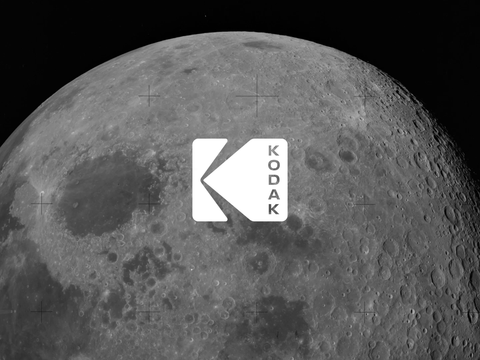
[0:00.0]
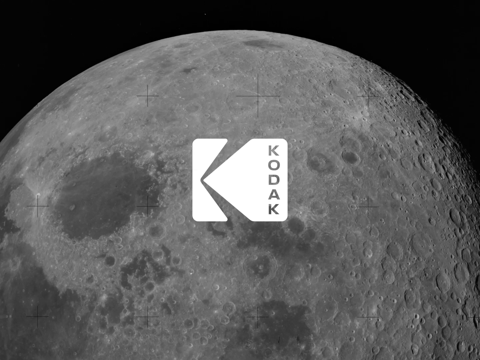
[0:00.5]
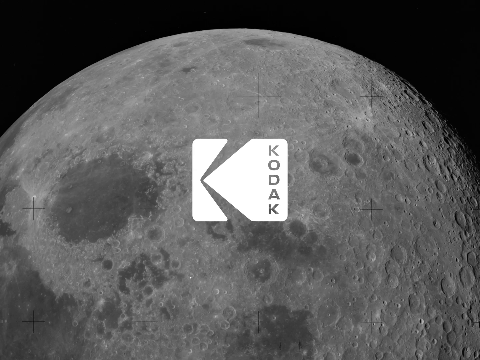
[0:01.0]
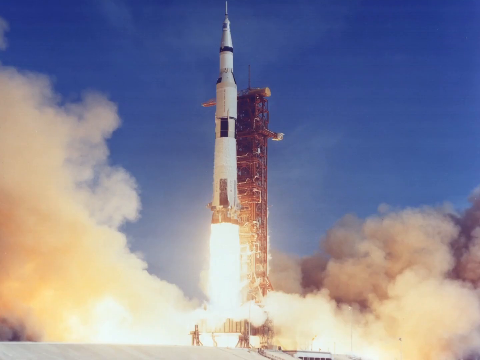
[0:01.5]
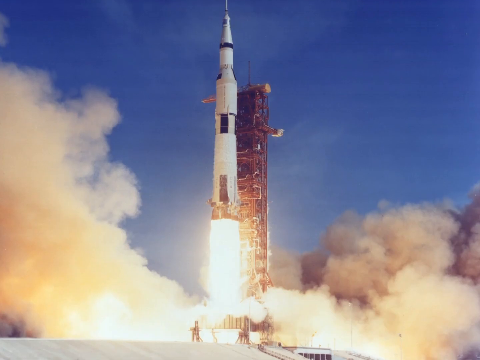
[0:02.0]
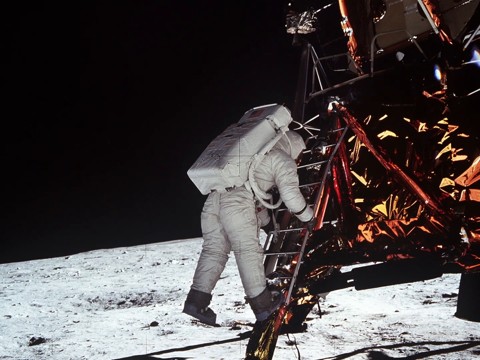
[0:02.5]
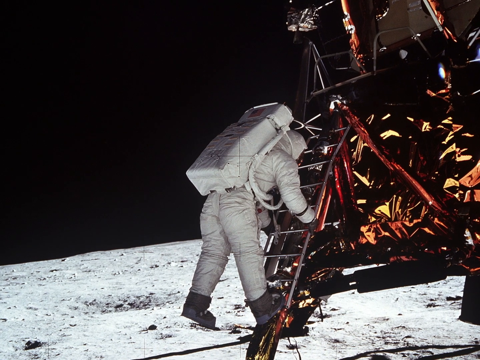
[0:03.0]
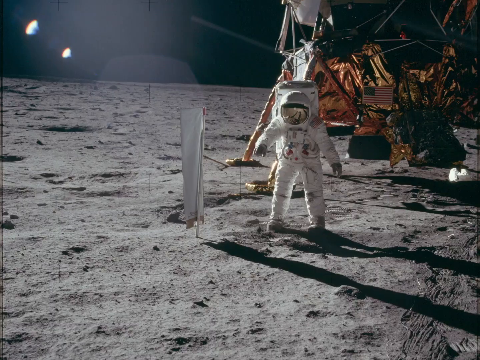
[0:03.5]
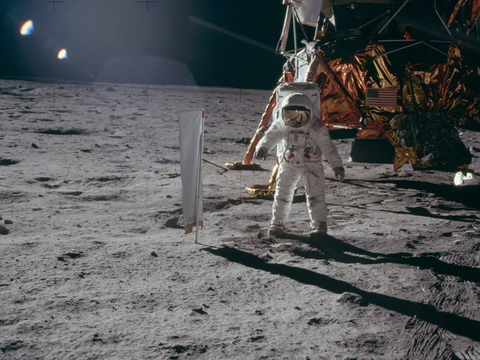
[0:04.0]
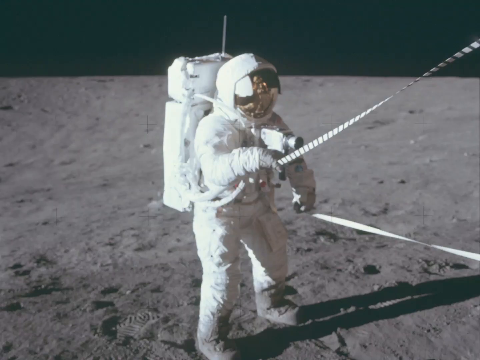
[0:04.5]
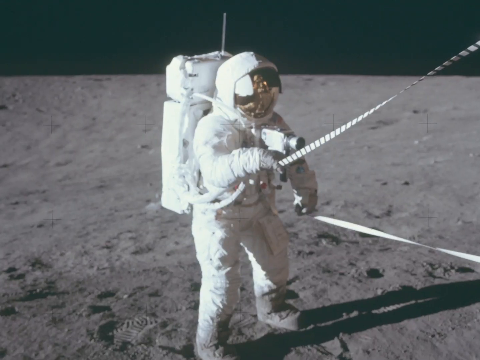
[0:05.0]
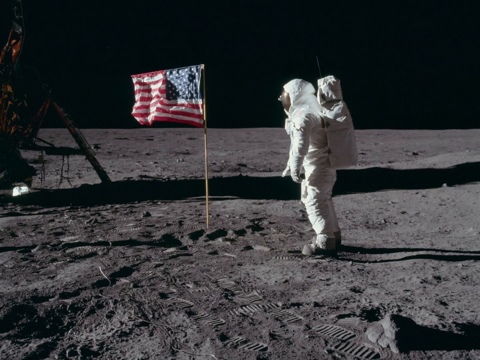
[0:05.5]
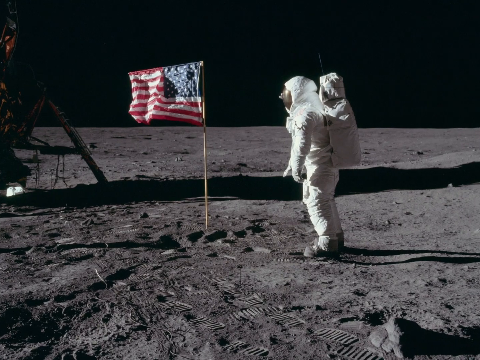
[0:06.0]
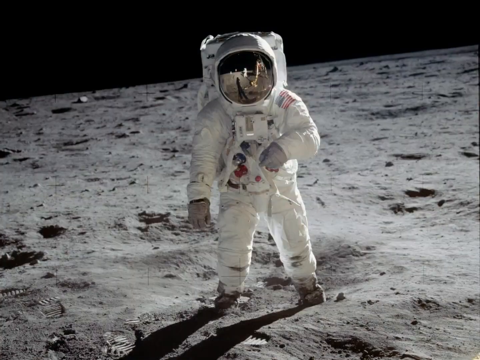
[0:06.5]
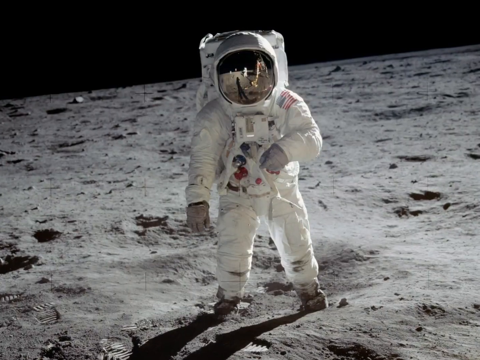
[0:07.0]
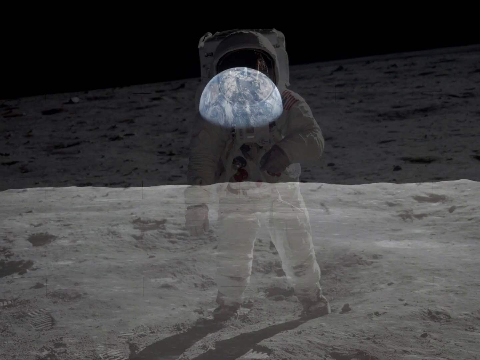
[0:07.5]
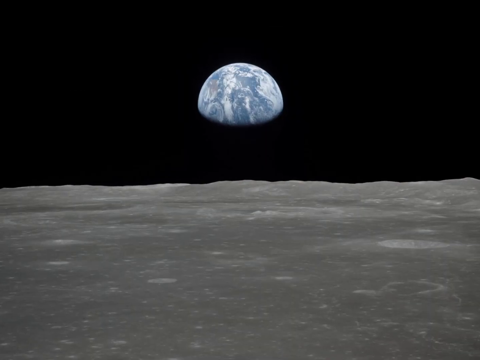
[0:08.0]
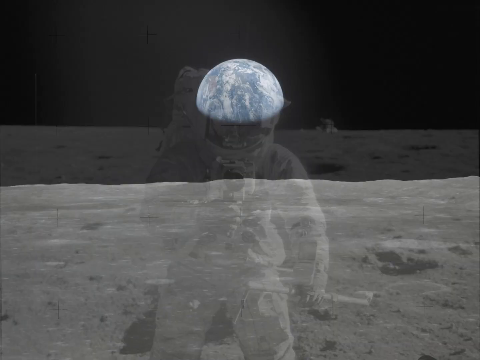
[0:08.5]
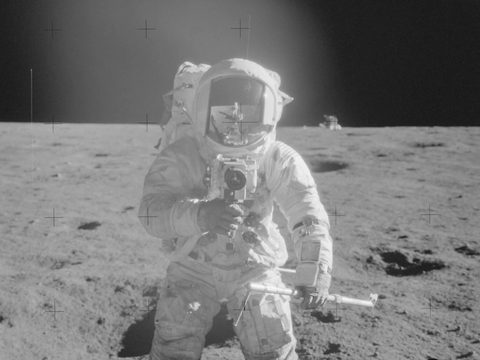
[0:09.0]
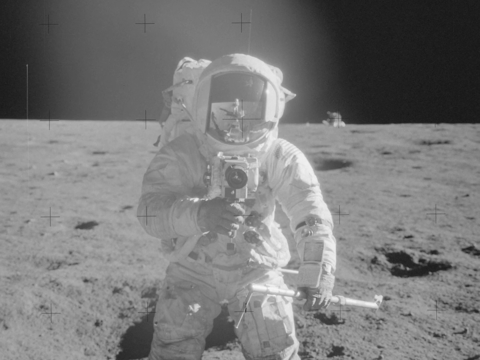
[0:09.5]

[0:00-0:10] The video opens with a far view of the moon, with the Kodak logo in white in the middle. Several pictures follow, including one of a spaceship taking off, with blue sky around the spaceship and several clouds of smoke. Next come different pictures of astronauts who look to be landing on the moon, then an American flag being grounded on the moon. More pictures follow, and most of them are clearly visible. The video is in a square shape.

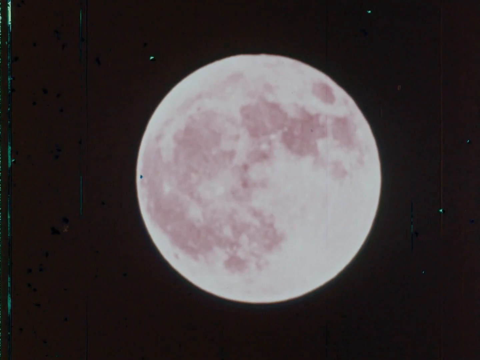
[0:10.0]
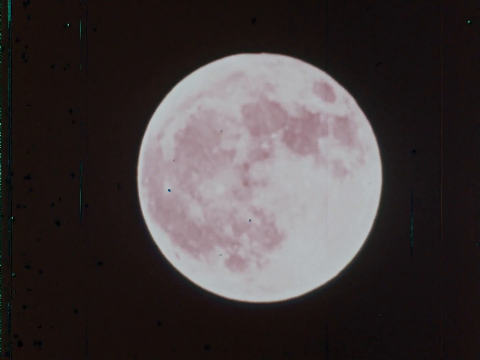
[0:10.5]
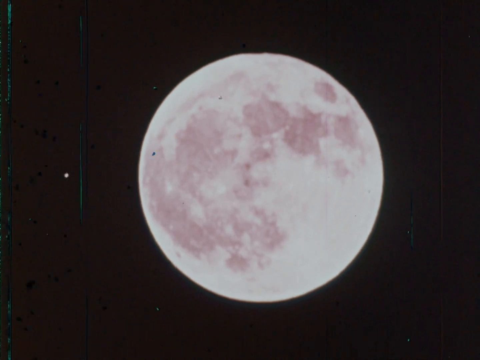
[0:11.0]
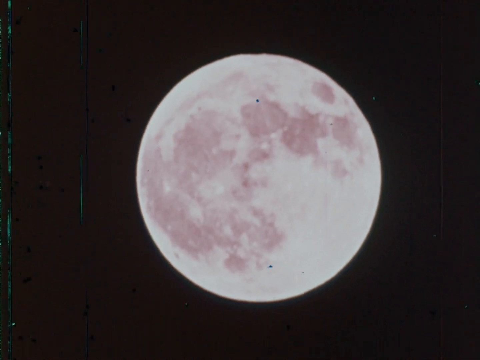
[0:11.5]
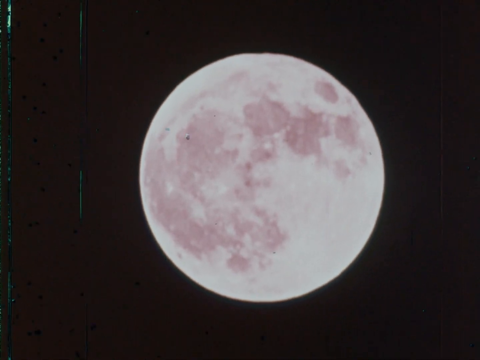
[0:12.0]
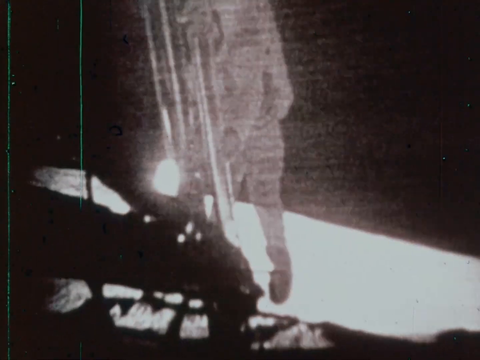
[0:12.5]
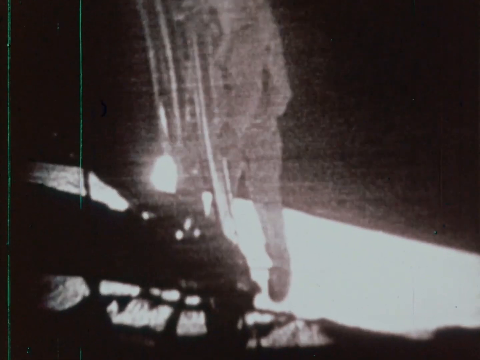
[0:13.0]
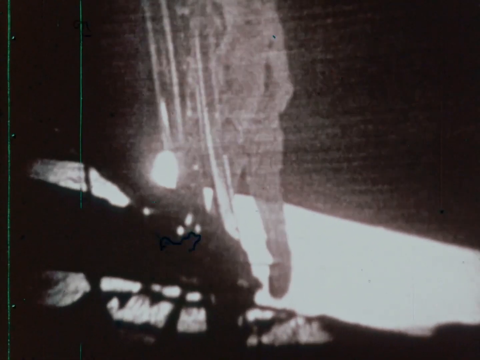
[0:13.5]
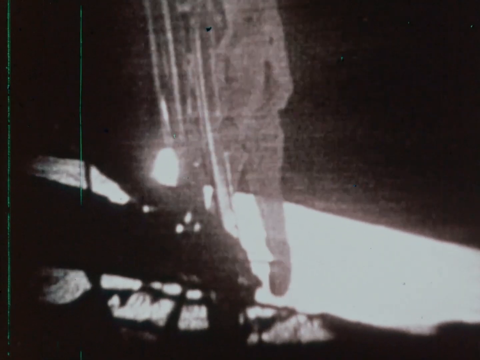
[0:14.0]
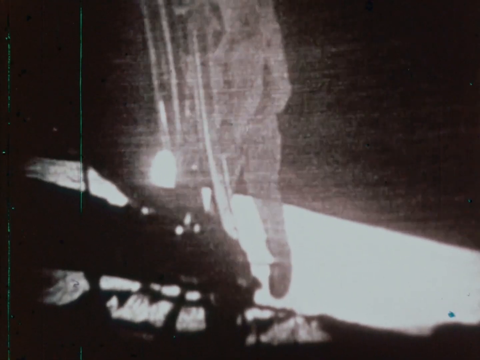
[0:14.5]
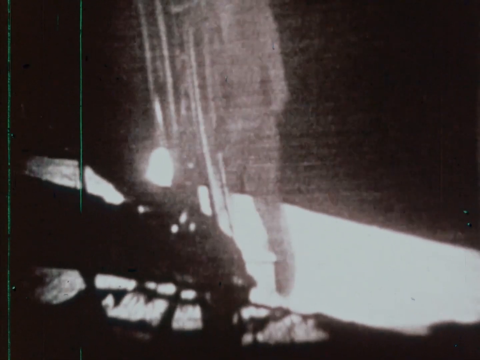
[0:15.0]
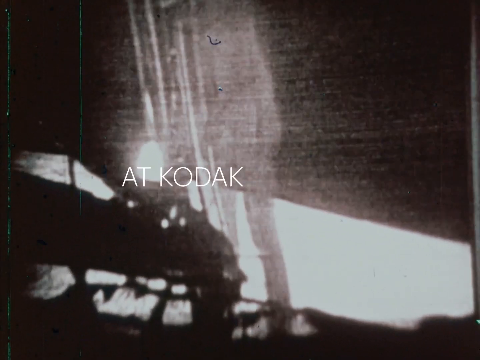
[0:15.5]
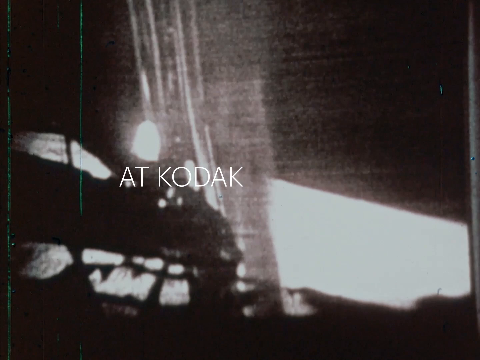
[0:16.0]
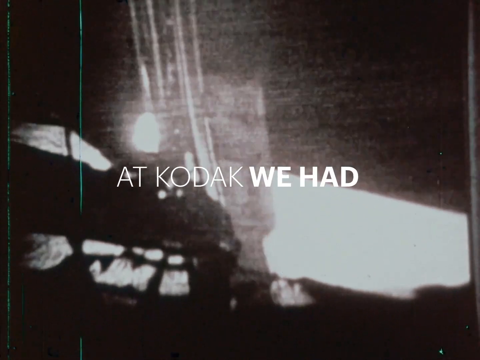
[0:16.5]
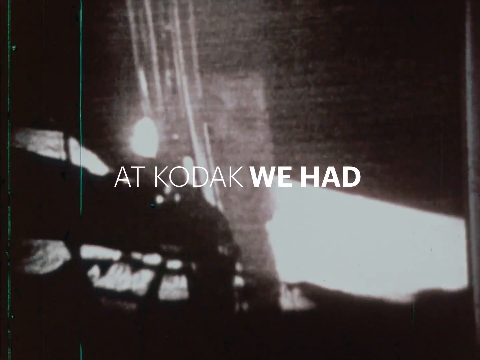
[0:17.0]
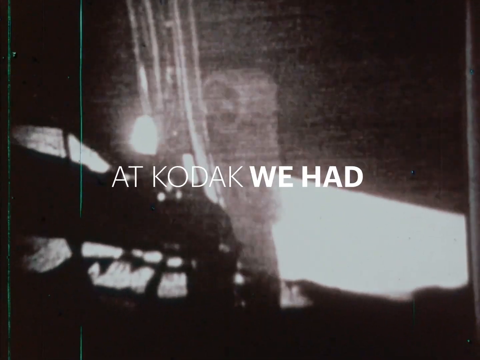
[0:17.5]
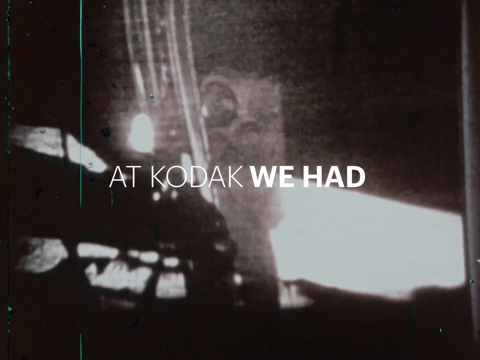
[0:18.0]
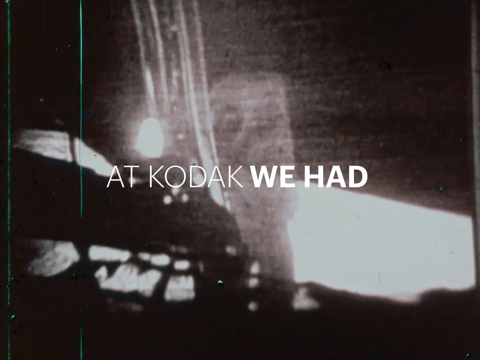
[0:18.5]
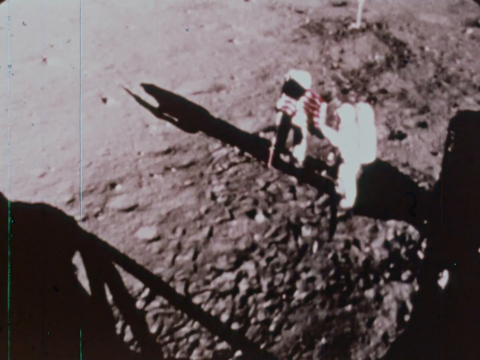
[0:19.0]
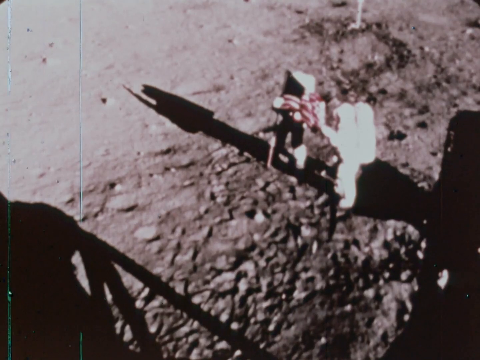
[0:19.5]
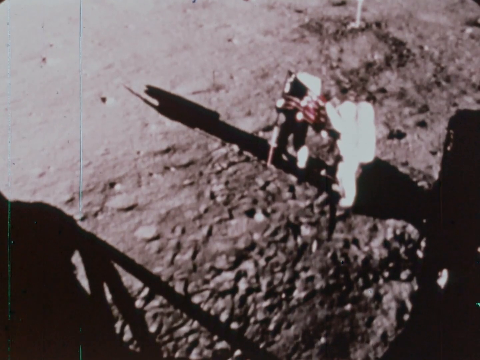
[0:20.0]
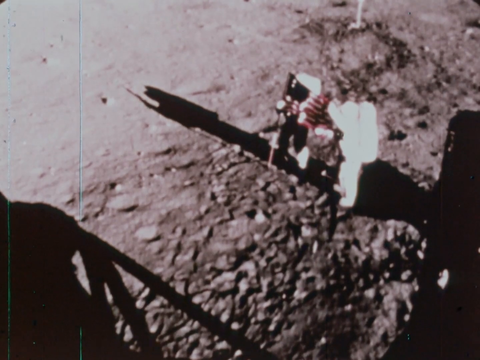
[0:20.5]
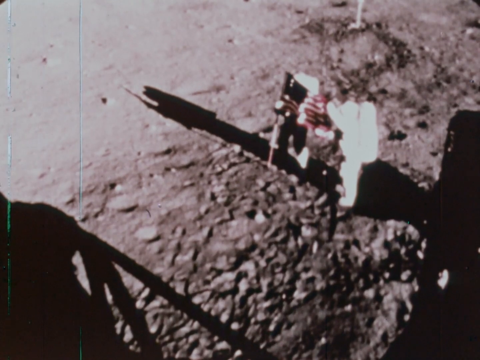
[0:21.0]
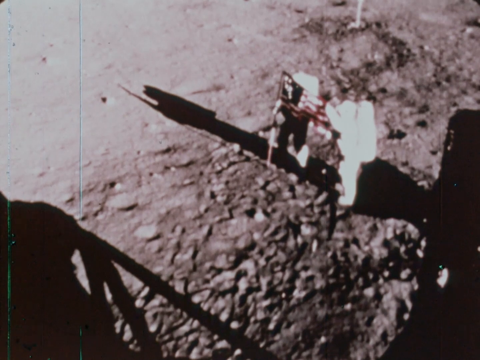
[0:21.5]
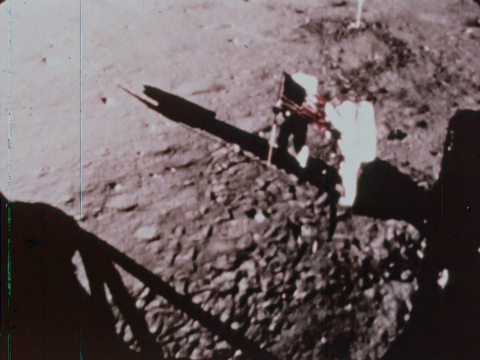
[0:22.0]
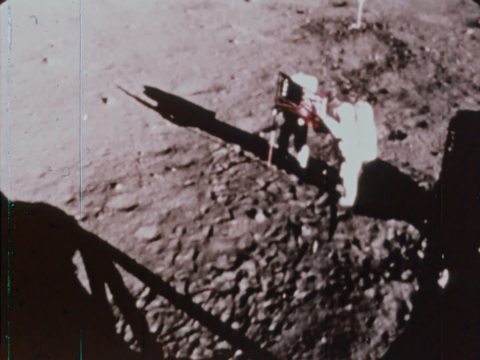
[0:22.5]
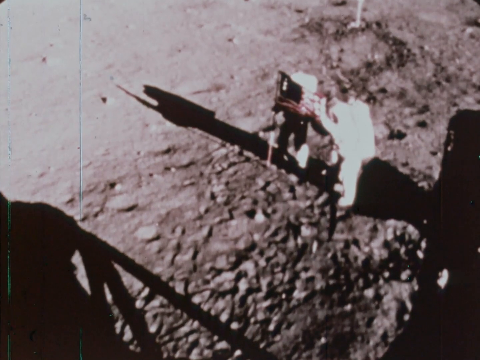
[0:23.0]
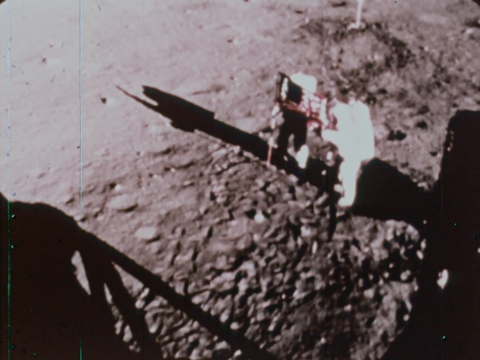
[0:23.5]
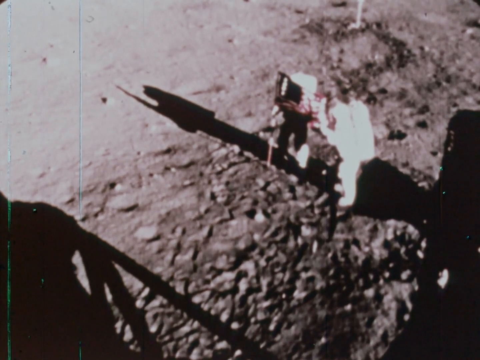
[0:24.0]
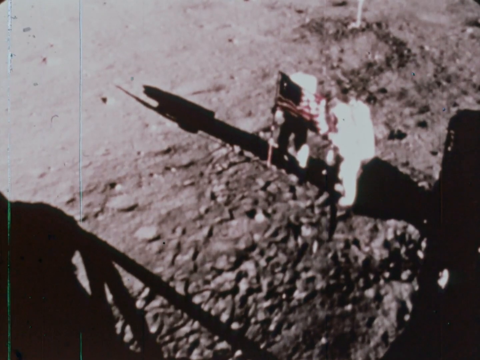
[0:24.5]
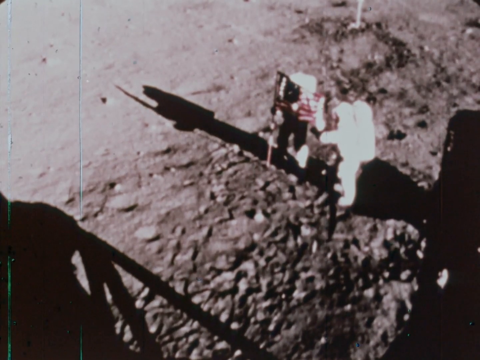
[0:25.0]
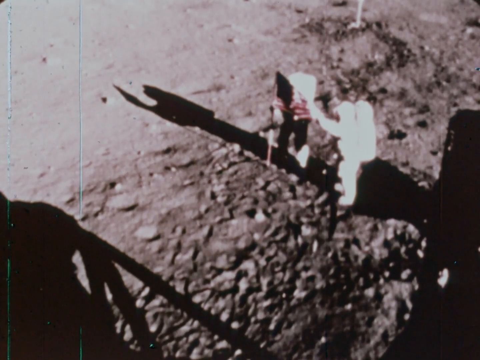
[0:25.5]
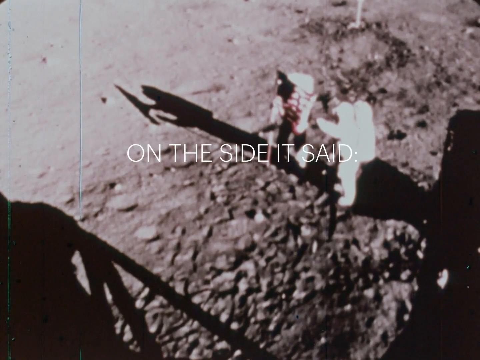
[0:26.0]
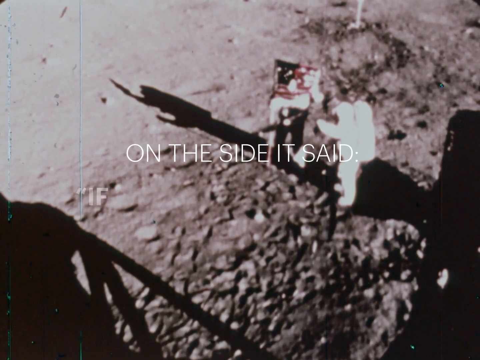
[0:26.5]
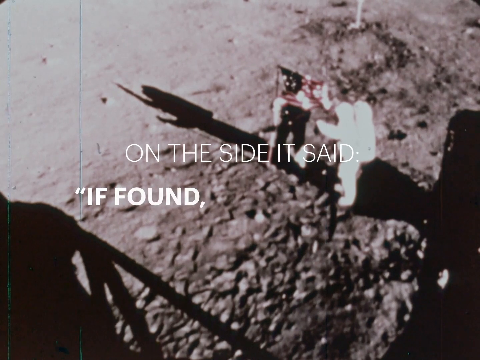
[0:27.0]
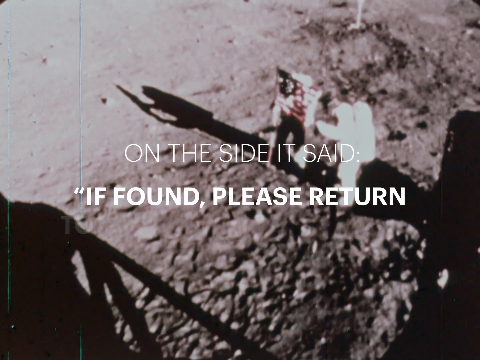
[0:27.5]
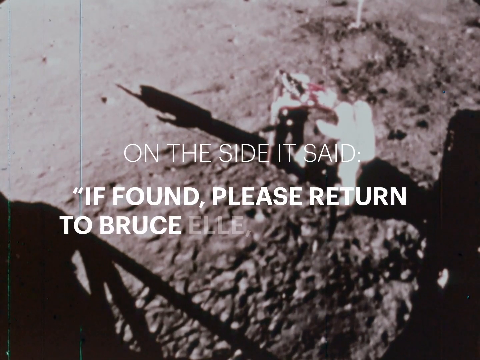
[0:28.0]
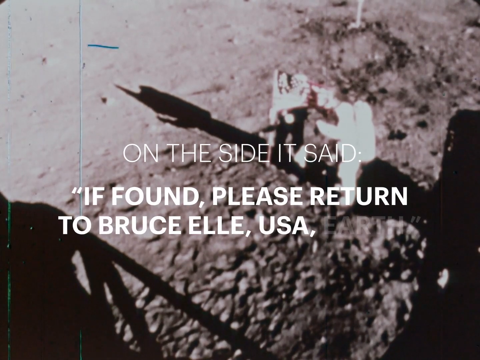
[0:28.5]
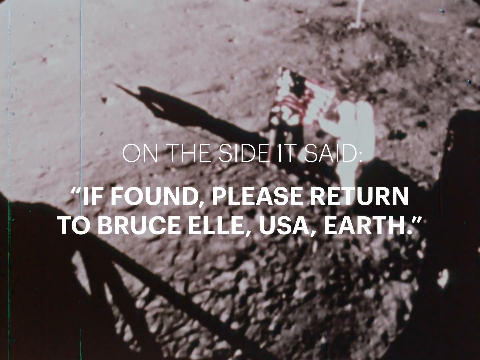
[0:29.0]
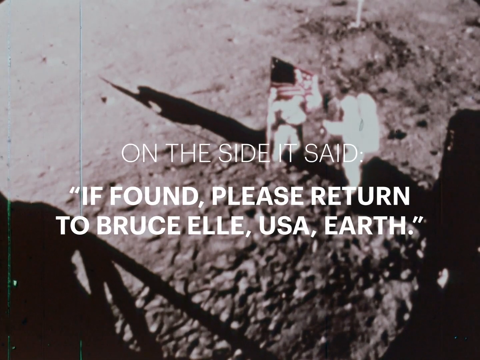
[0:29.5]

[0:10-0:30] A video clip shows the moon from a far distance; the footage appears to come from an older camera, given its low quality. An astronaut is shown outside a spaceship, dressed in full astronaut gear in white. The words "at Kodak we had" appear in the middle. A very low-quality video then shows two astronauts on what looks to be the moon's surface, planting the American flag, with their shadows and the shadow of the spaceship next to them visible. Text in the middle then reads "on the side it said, if found, please return to Bruce L USA Earth." The video is in a square shape, and there are no animals in it.